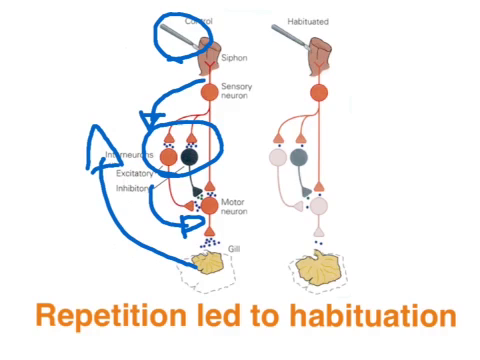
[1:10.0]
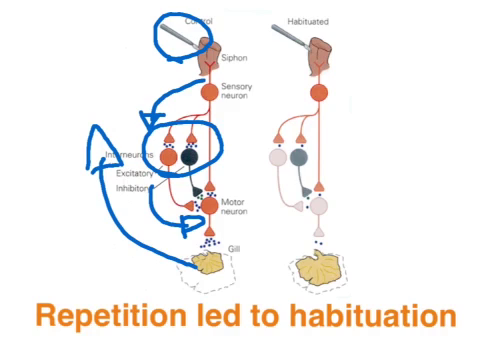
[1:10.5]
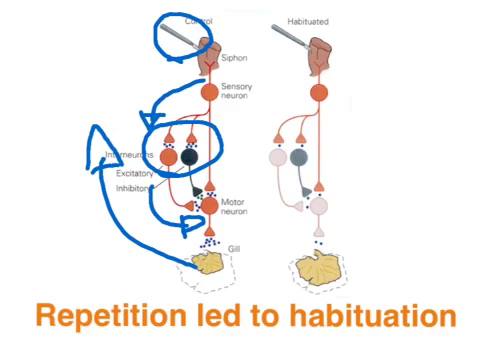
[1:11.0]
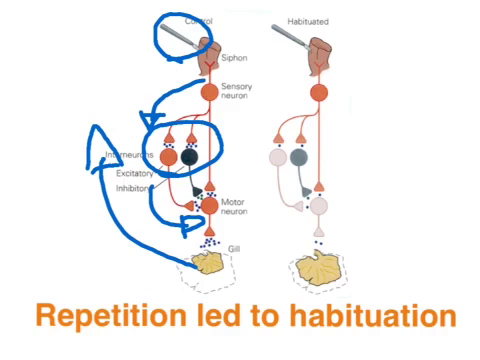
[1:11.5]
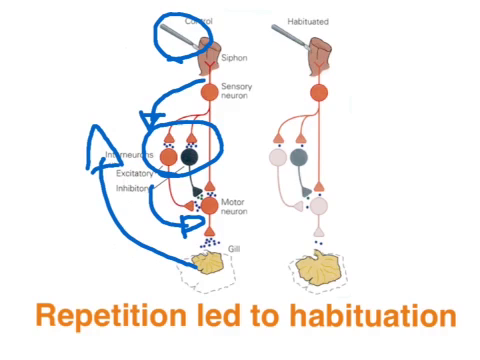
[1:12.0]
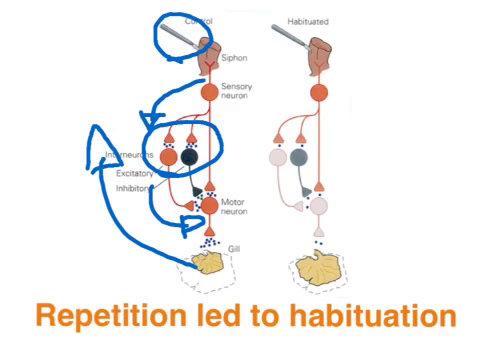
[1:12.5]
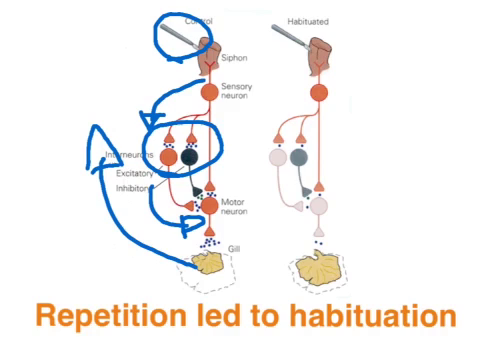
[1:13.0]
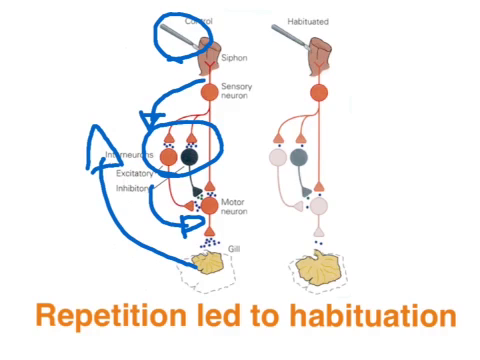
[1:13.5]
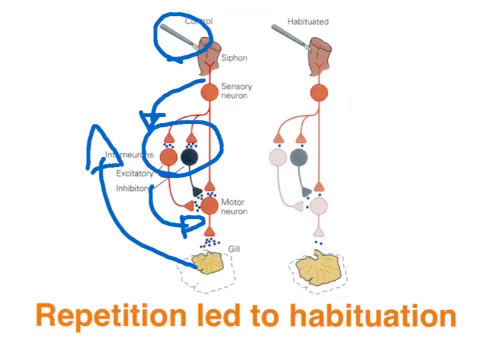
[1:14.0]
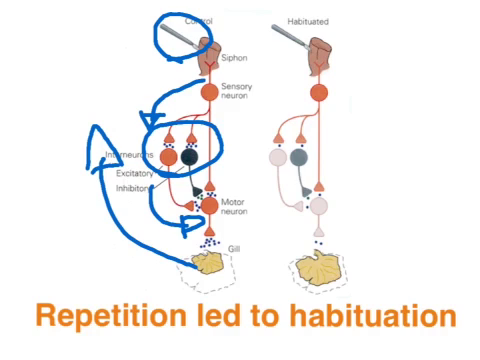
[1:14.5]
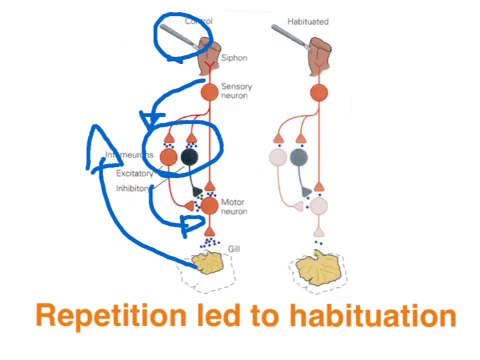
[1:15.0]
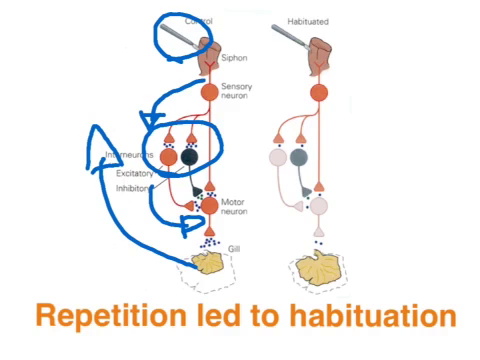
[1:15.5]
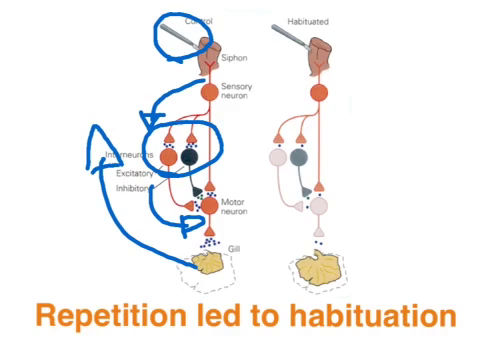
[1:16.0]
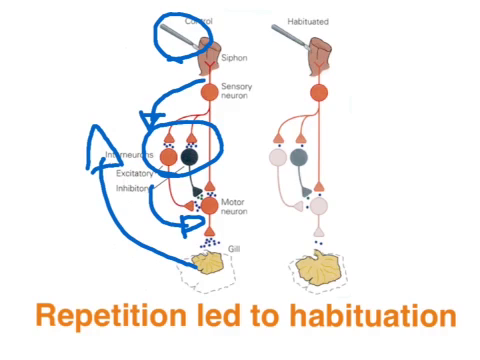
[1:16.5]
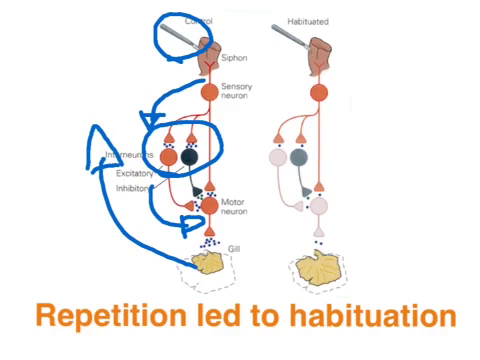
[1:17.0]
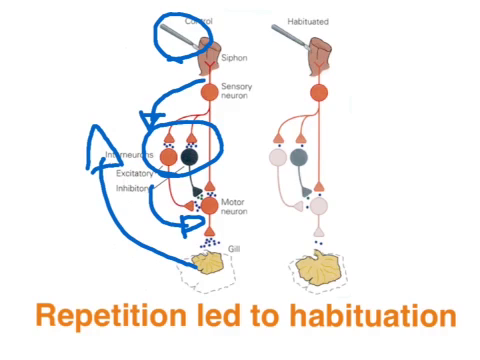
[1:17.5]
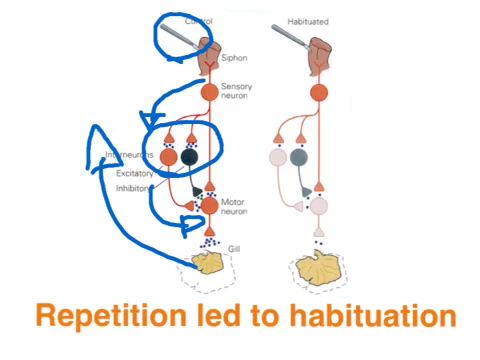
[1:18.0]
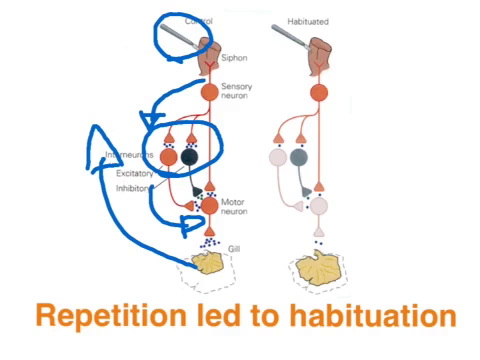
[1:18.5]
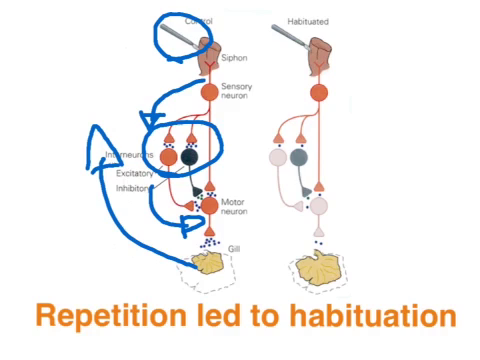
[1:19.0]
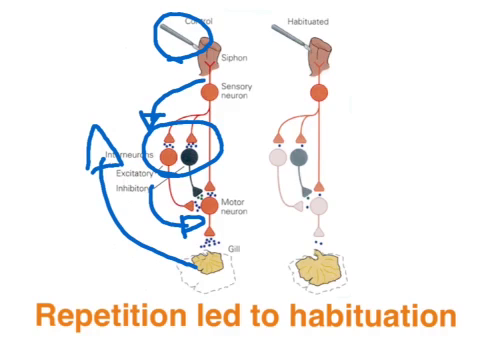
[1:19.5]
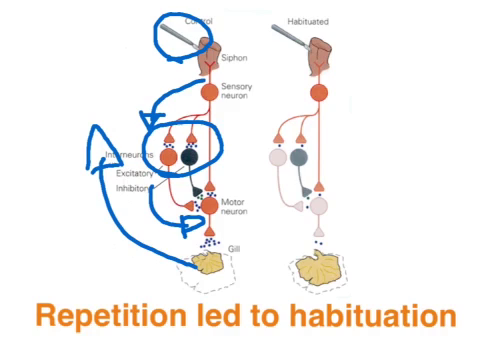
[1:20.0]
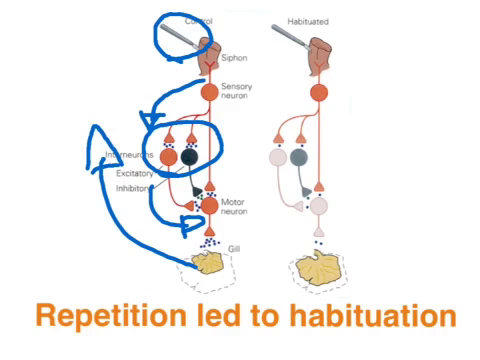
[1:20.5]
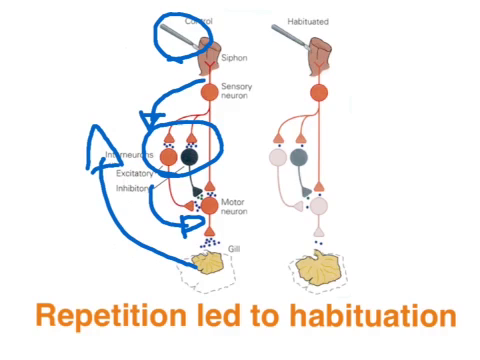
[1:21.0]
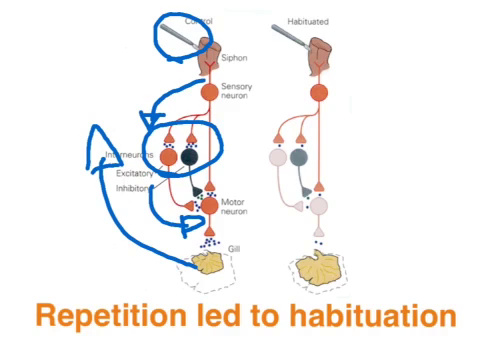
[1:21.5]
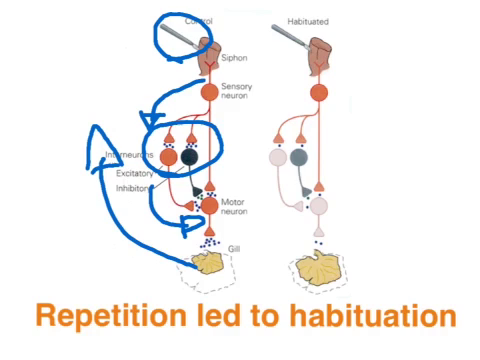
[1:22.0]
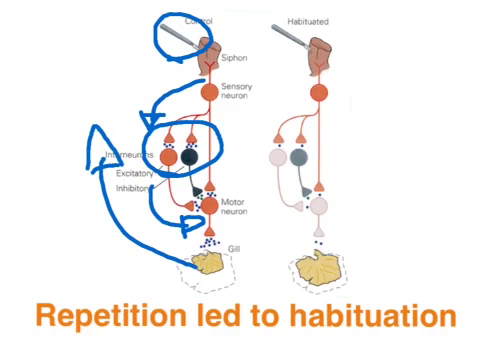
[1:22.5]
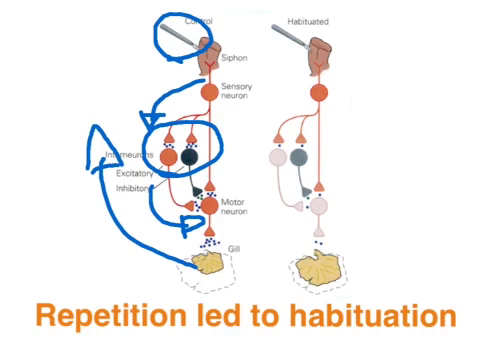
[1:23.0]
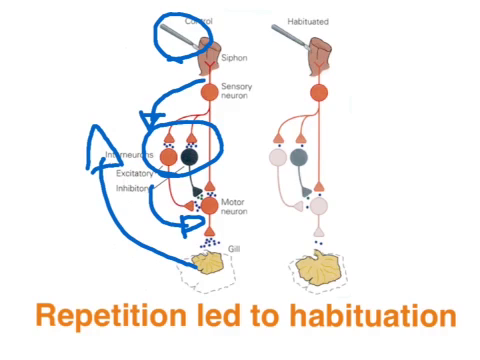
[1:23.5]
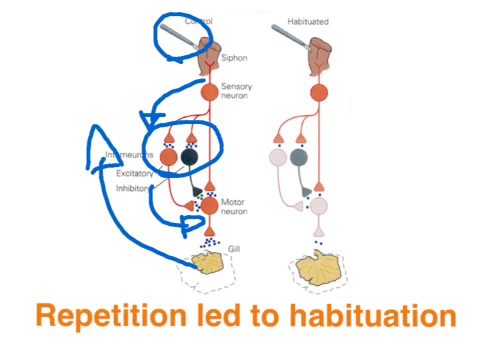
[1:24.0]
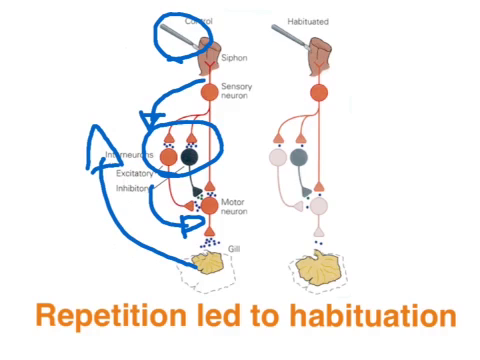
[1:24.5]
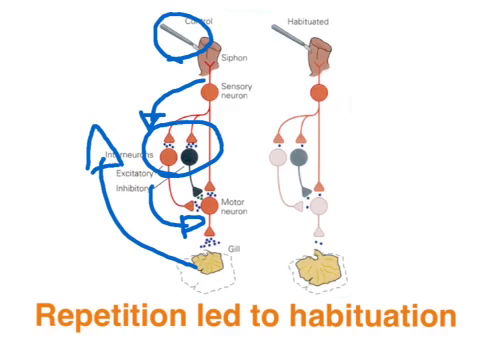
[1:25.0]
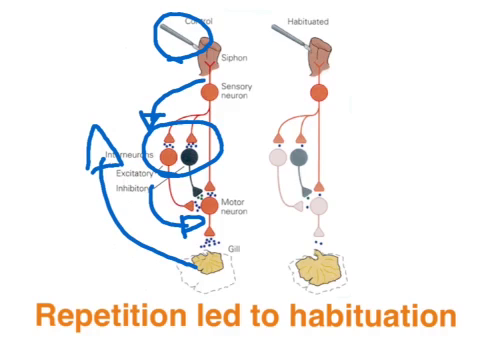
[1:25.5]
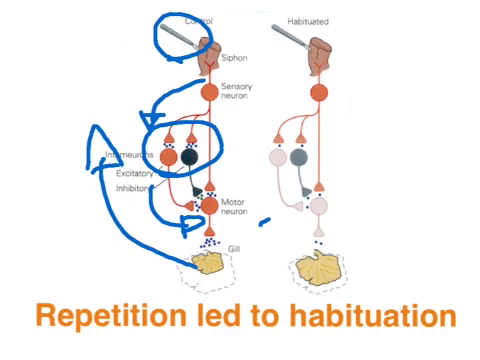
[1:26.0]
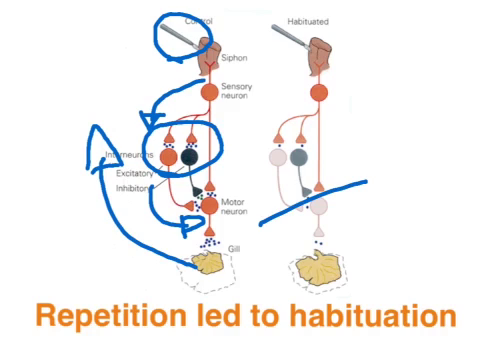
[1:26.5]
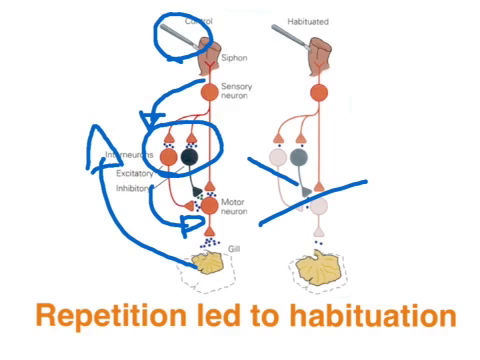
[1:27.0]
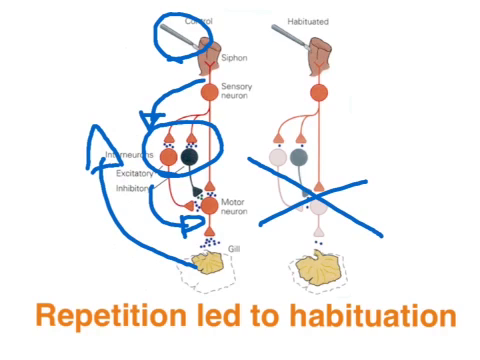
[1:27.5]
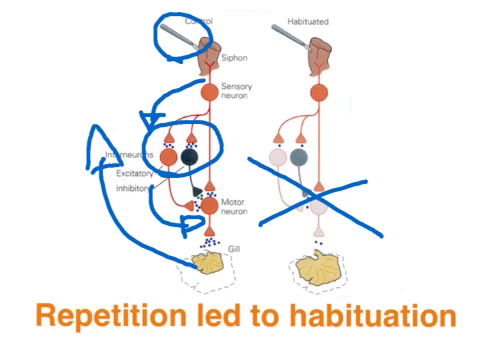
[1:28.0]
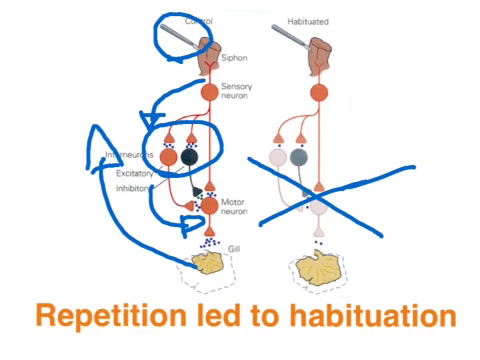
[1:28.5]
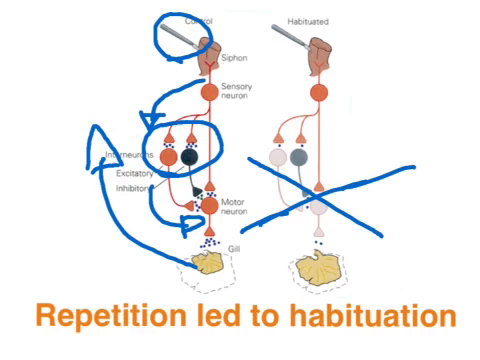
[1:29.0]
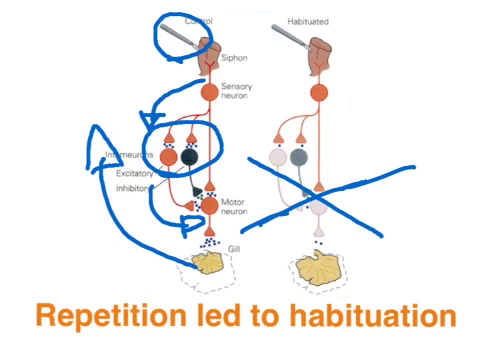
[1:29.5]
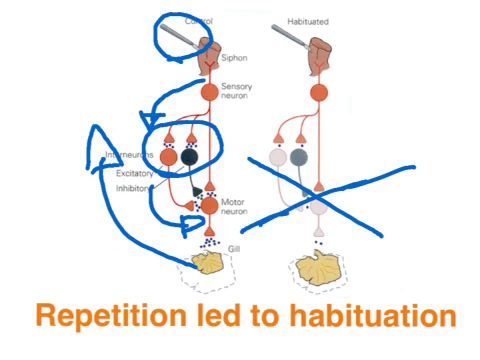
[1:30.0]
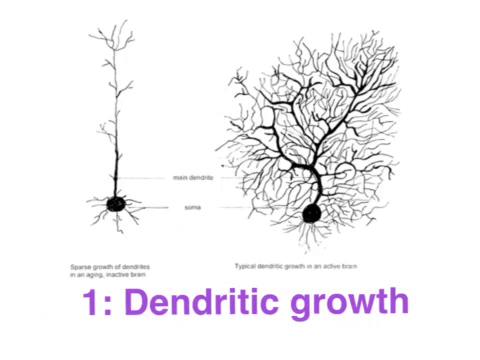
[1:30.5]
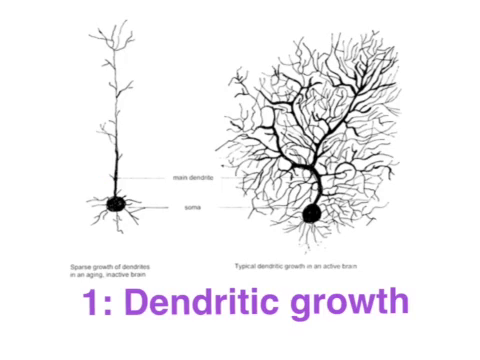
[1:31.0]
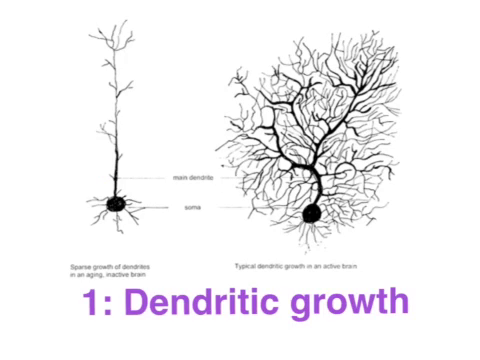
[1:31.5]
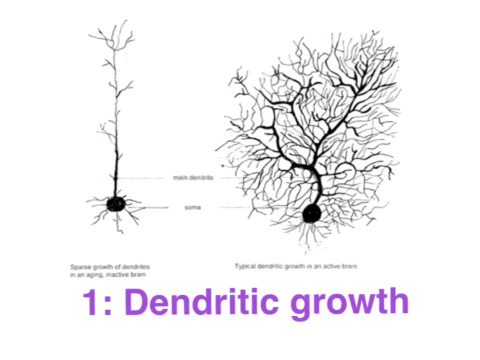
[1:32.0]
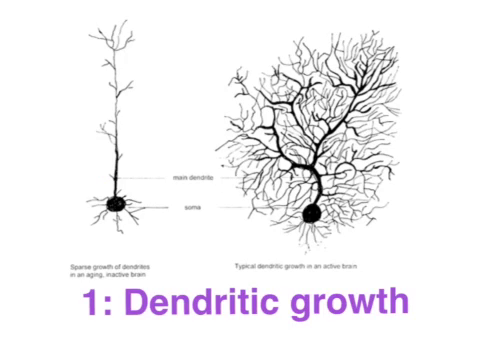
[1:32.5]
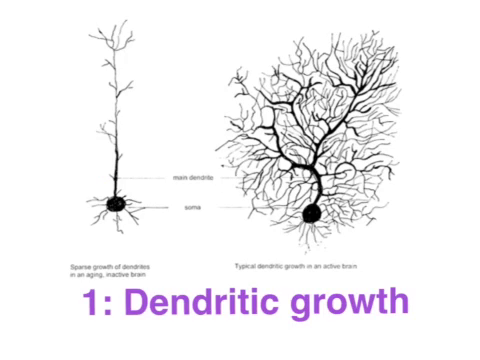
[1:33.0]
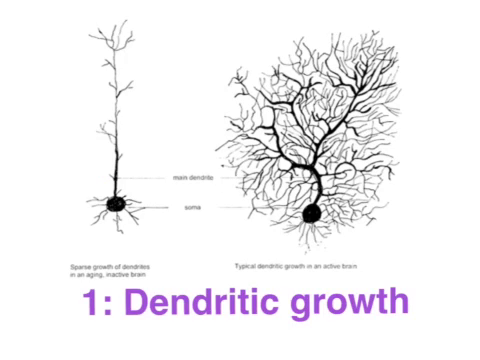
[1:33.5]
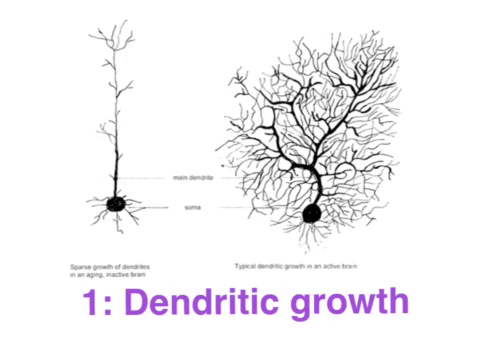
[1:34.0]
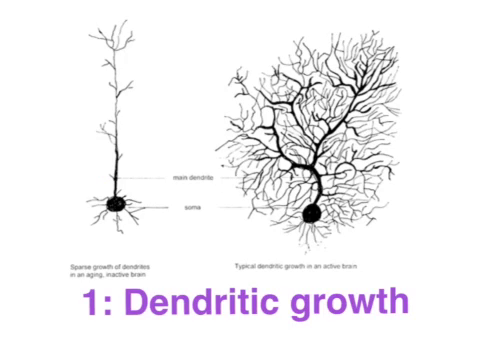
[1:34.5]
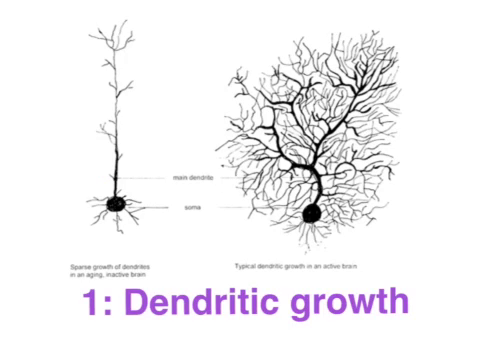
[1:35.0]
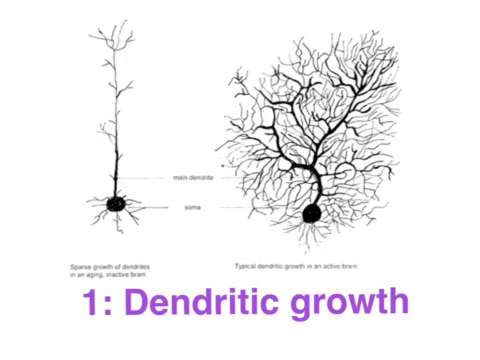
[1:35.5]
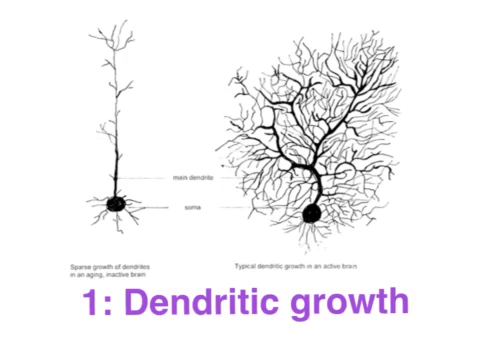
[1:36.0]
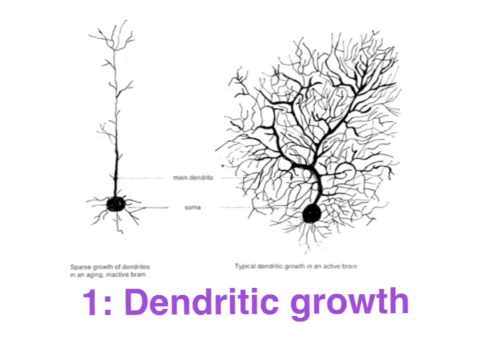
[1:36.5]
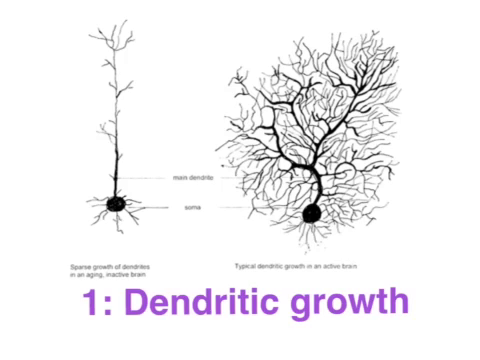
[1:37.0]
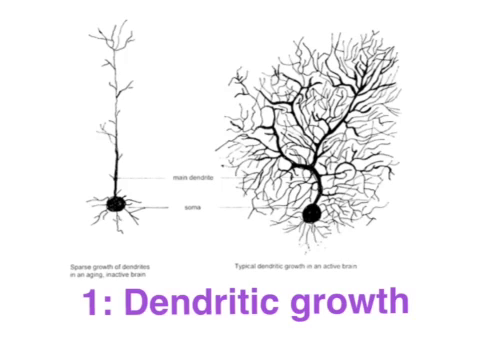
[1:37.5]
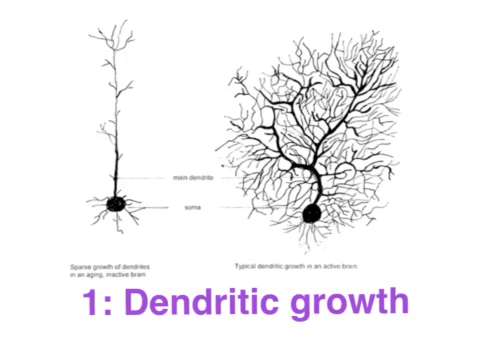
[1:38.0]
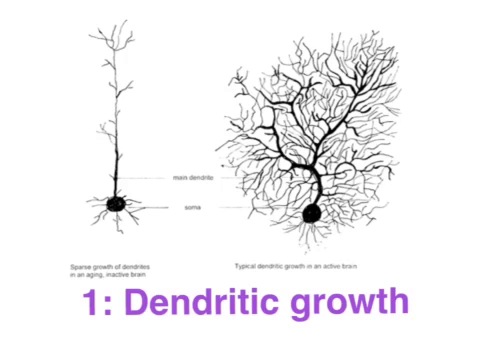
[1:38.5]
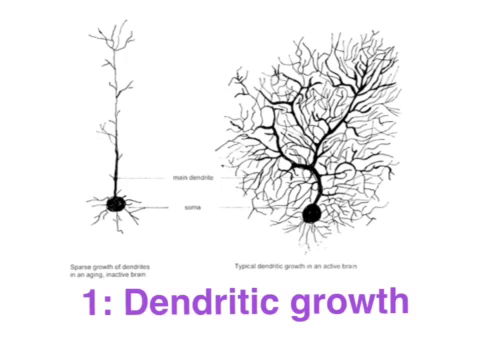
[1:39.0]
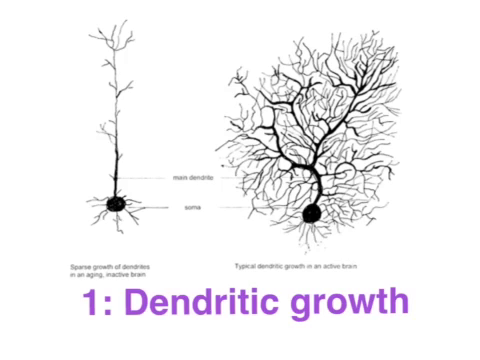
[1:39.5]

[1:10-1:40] The "repetition led to habituation" image continues, with the text underneath. The two identical drawings are labeled "control" on the left and "habituated" on the right. At the top, the siphon is rendered in brown. A red line runs down from it to a red circle labeled "sensory neuron," then continues to the right, where two branches come off: the left one leads to a red circle and the right one to a black circle. Below that, the red line continues straight down to another circle labeled "motor neuron," then ends in a red triangle above the yellow area labeled "gill." The left drawing is marked with the blue circles and arrows drawn earlier. A blue X appears above the right-hand side that says "habituated." The image then changes to an illustration with two figures, with "1: dendritic growth" written underneath in purple. On the left is a tree-like object with bare branches, captioned "sparse growth of dendrites in an aging, inactive brain." On the right is a much more vigorous tree with many more branches and tendrils, captioned "typical dendritic growth on an active brain." Labels between the two areas point to the dendrite stems and the soma at the bottom.